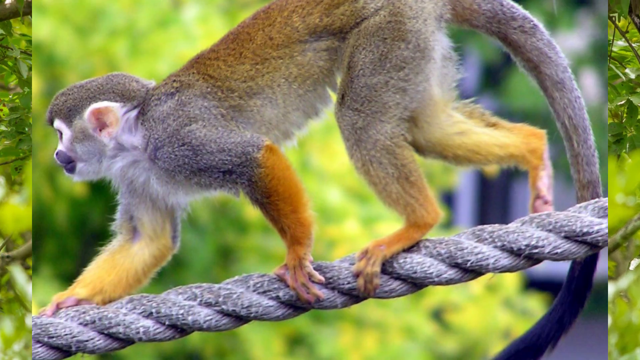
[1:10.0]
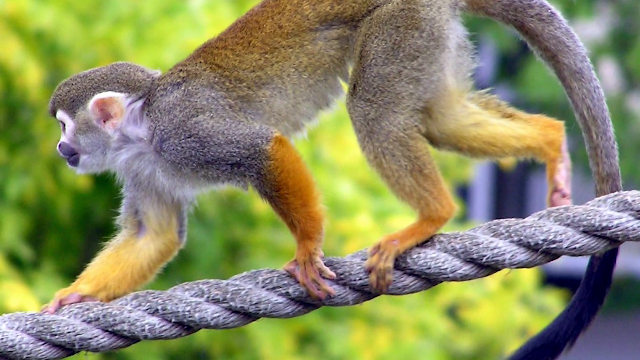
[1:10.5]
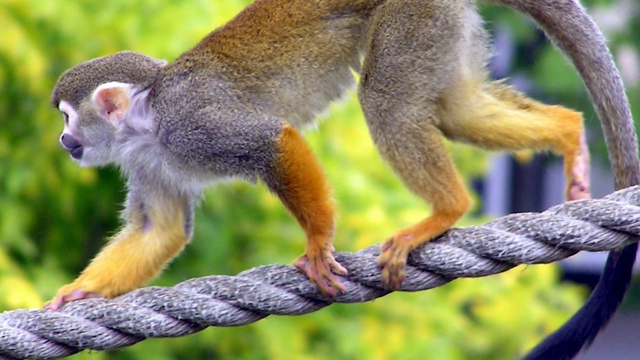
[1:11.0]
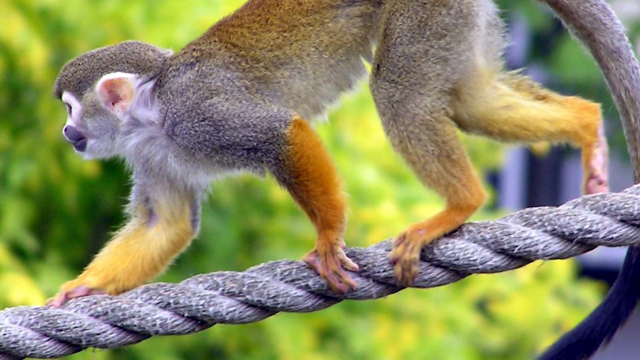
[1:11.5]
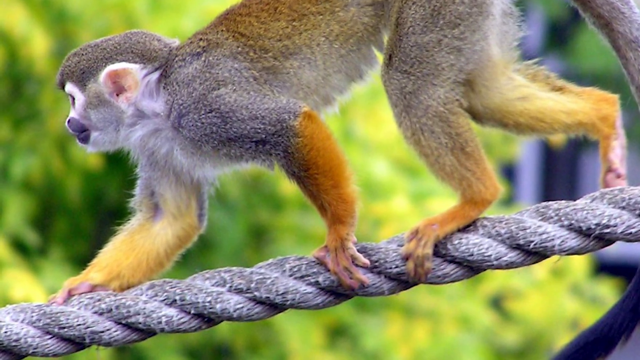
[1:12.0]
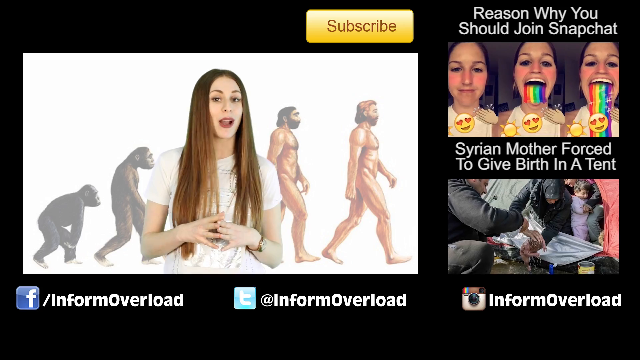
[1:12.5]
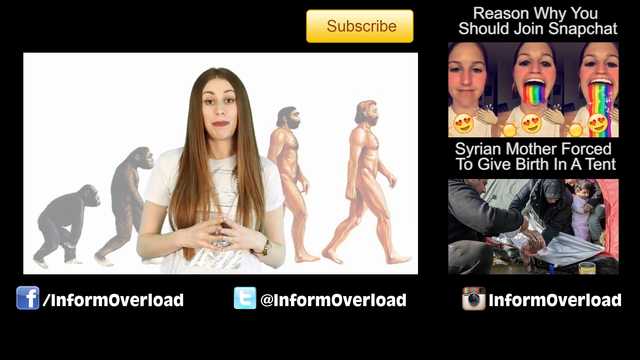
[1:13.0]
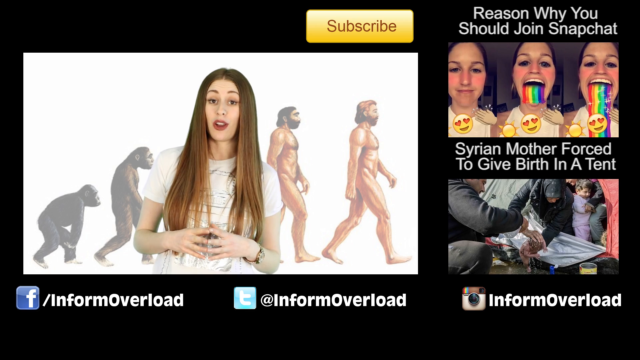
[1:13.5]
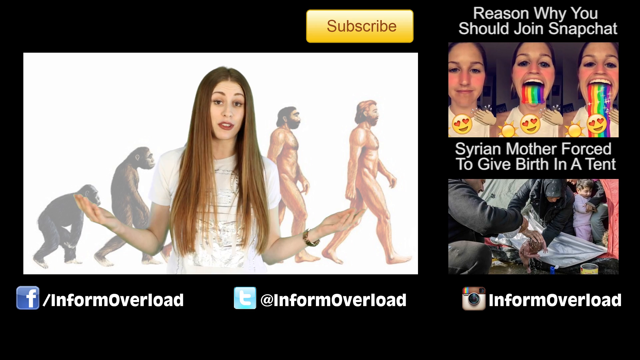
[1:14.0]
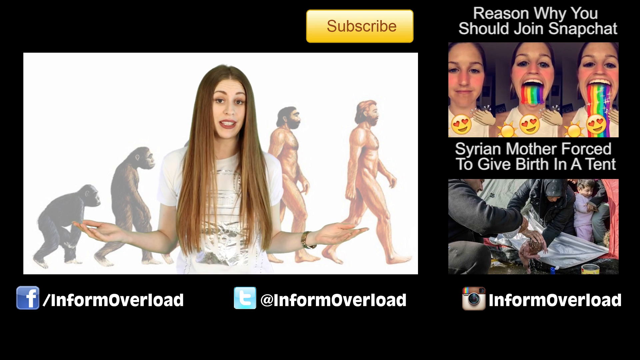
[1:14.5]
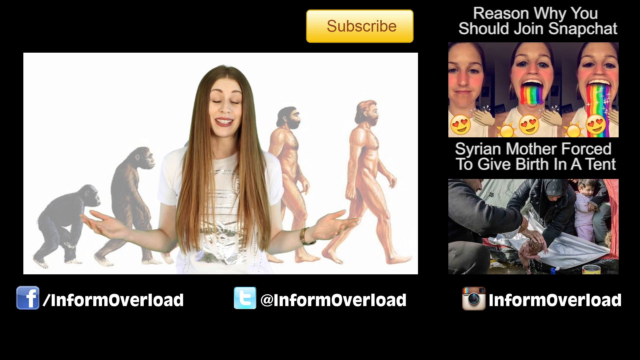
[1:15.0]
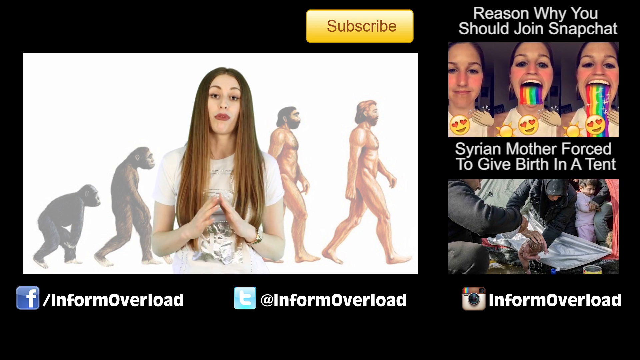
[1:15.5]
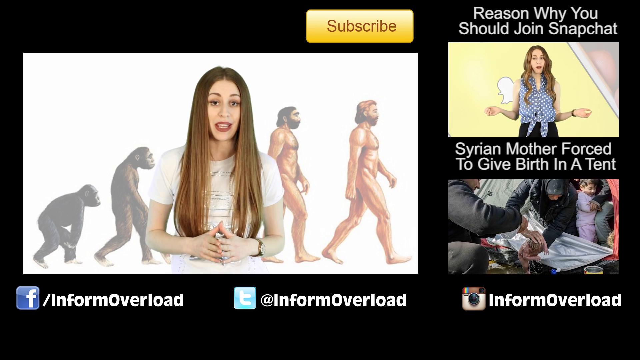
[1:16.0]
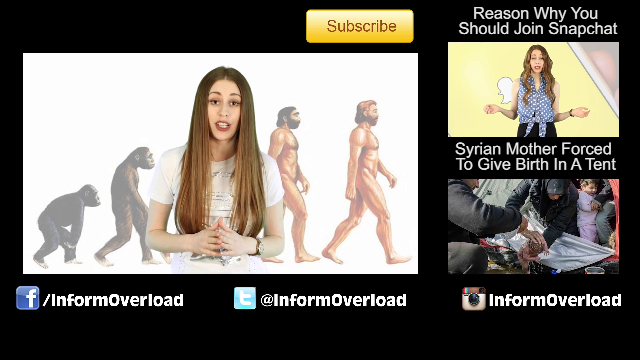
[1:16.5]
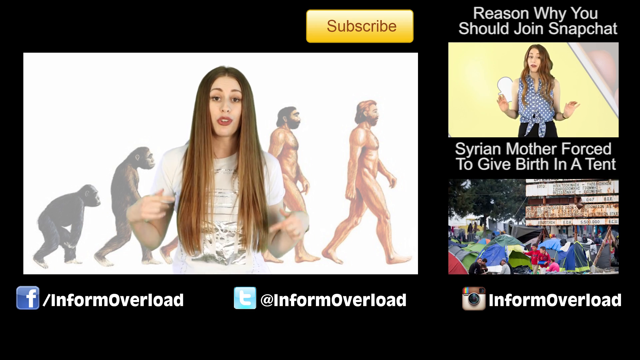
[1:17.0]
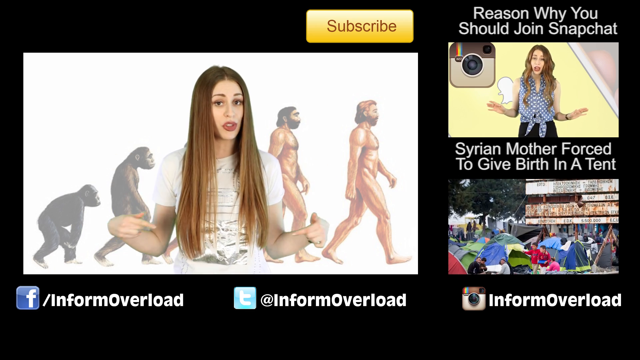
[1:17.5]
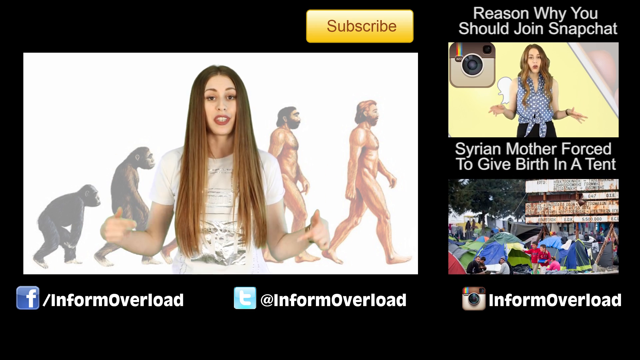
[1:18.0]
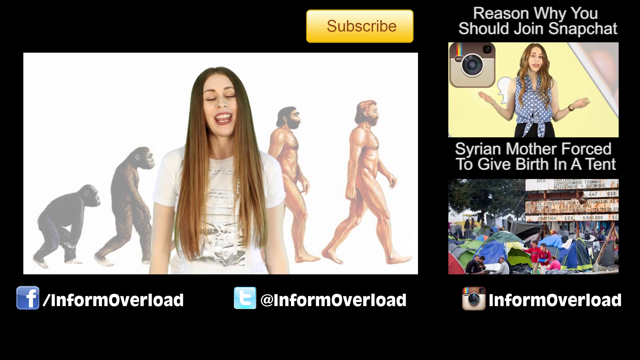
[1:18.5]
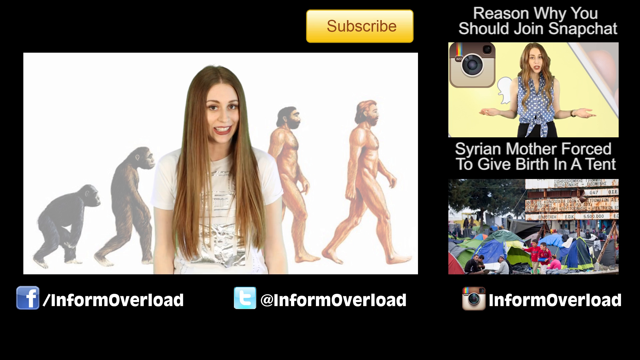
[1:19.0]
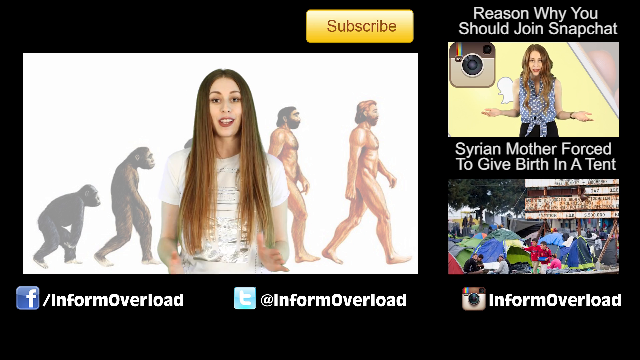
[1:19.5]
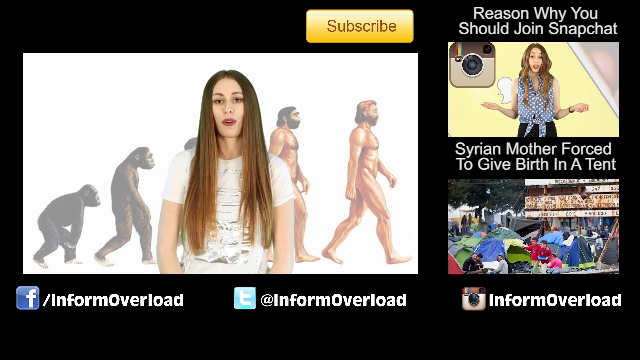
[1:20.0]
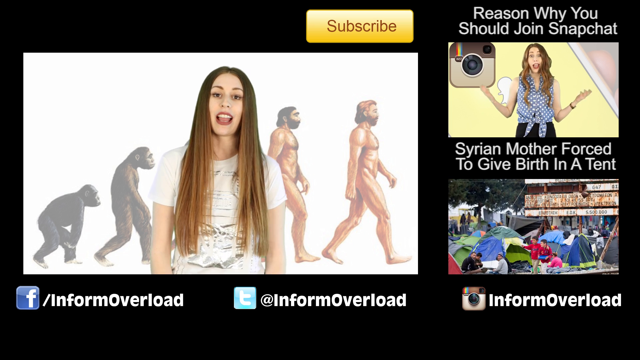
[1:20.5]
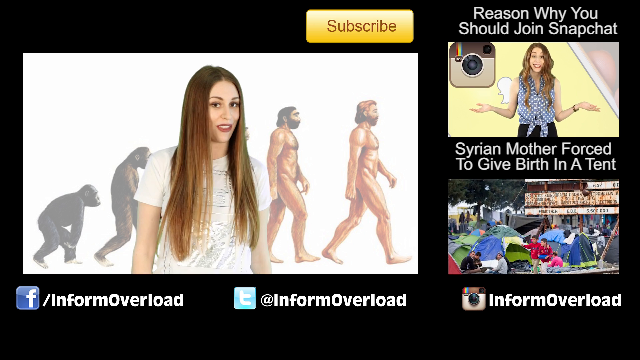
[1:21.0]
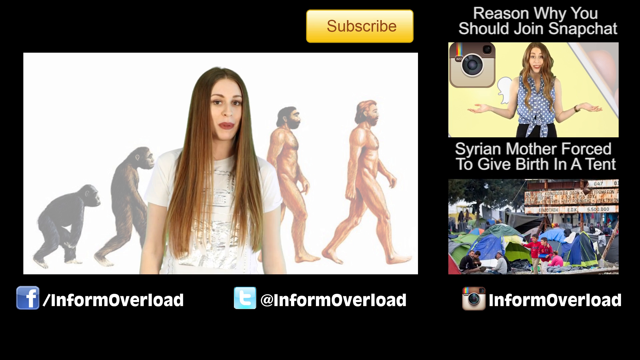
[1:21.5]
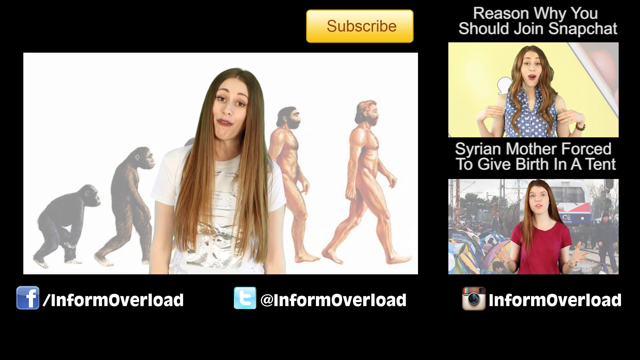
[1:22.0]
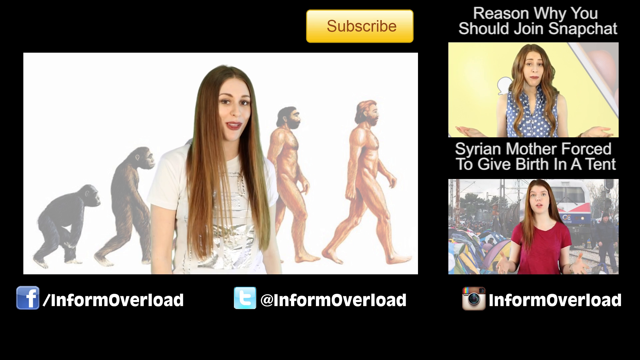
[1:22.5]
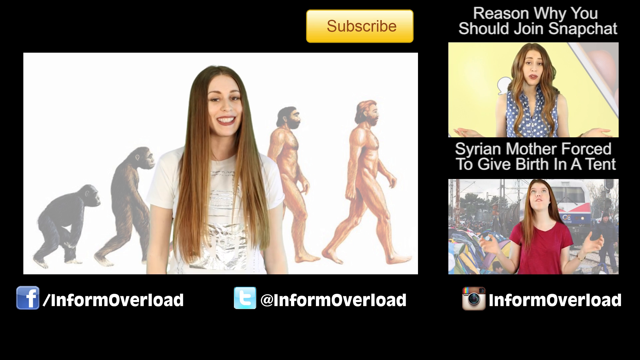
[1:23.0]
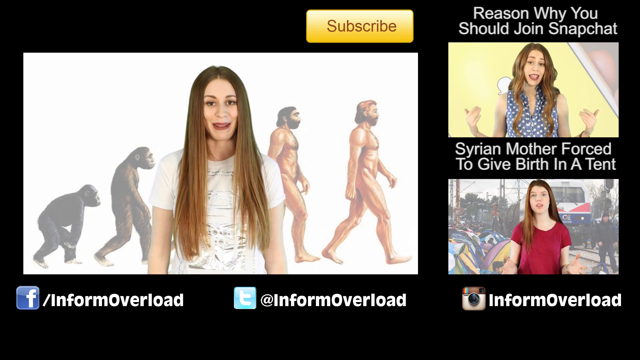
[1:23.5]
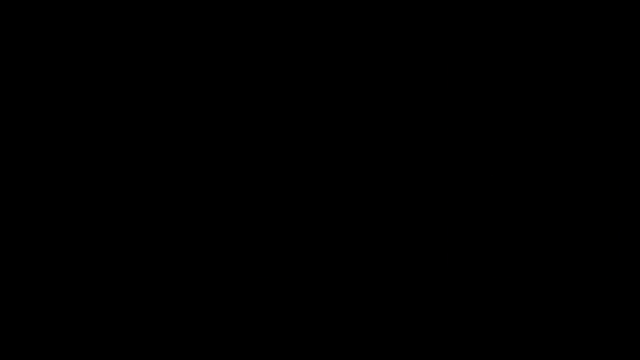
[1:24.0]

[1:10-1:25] The image of the monkey walking on a rope zooms in to the monkey's front legs and face. A new layout follows: the same background image of the primate evolving into a human is behind Charlotte, but the window is reduced in size and moved to the left portion of the screen. Above it is a yellow subscribe button on a black background. Below the window is the Facebook logo with the Inform Overload username, and to its right the Twitter logo with the same username. On the right of the screen are two video clips: the first is about reasons why you should join Snapchat, with an image of the same person with three different filters; beneath it is one about a Syrian mother forced to give birth in a tent, with an image of a lot of people in a tent, most likely giving birth. These seem to be preview videos from the same channel. Below them, in the bottom right corner, is the Instagram logo with the same Inform Overload username. Charlotte continues speaking to the camera before the video ends and fades to black.